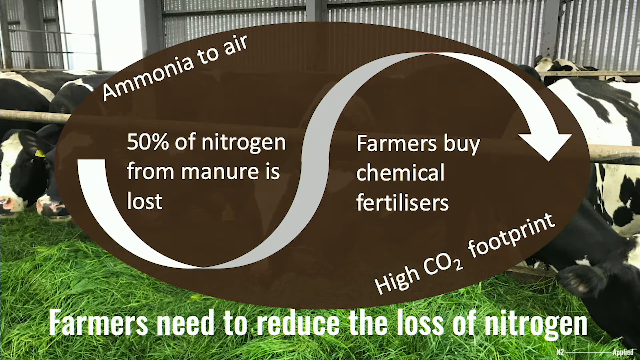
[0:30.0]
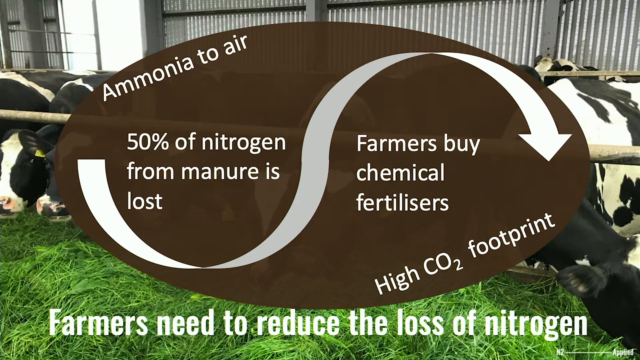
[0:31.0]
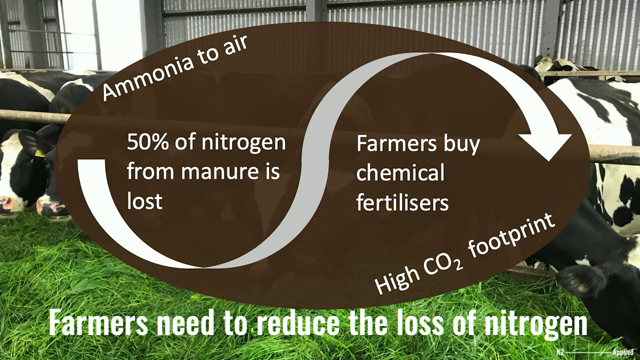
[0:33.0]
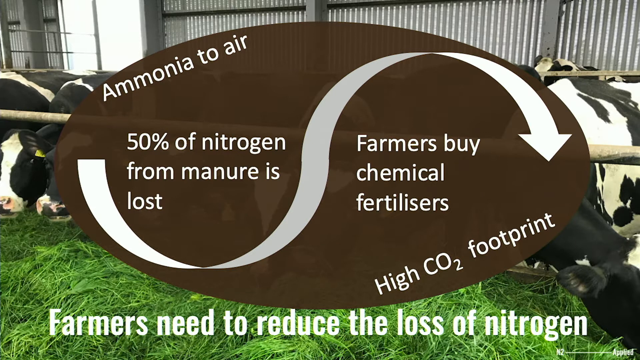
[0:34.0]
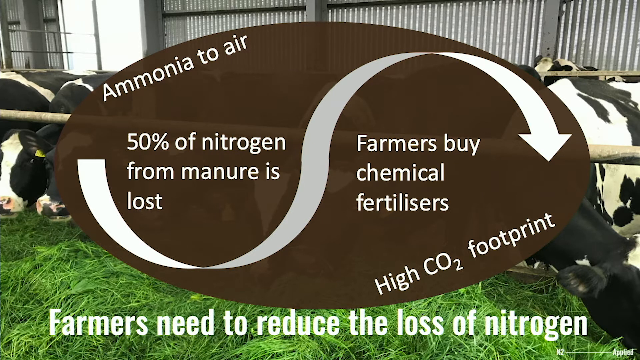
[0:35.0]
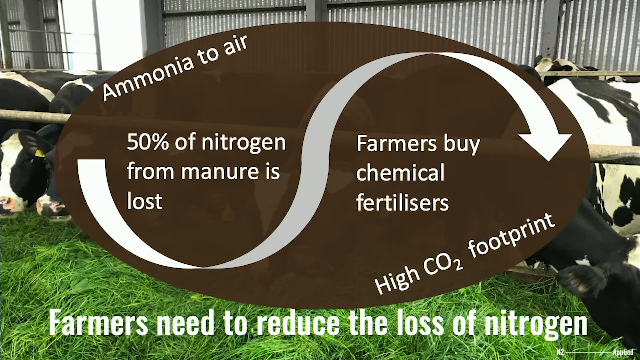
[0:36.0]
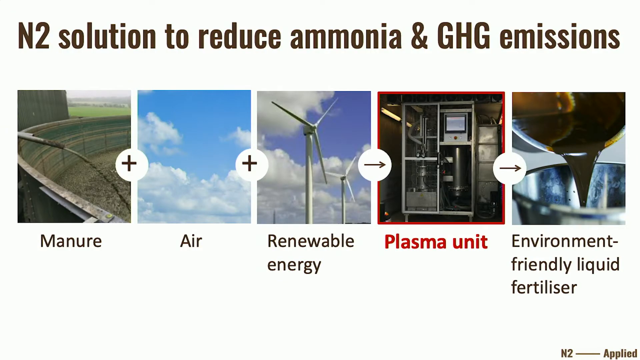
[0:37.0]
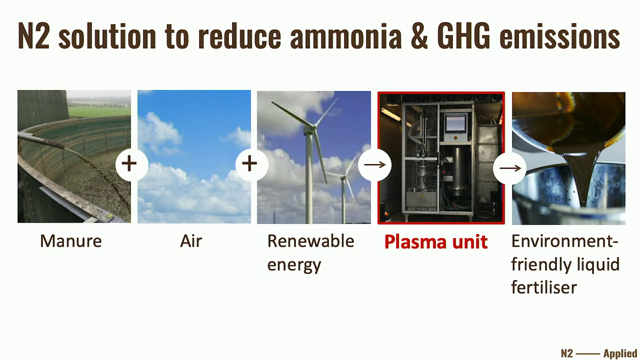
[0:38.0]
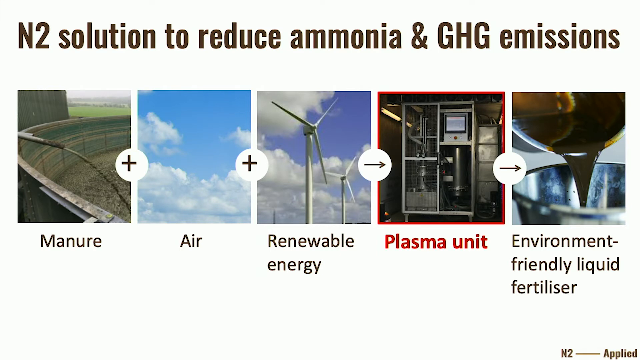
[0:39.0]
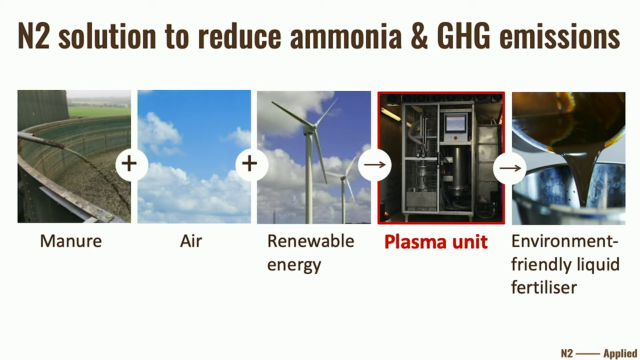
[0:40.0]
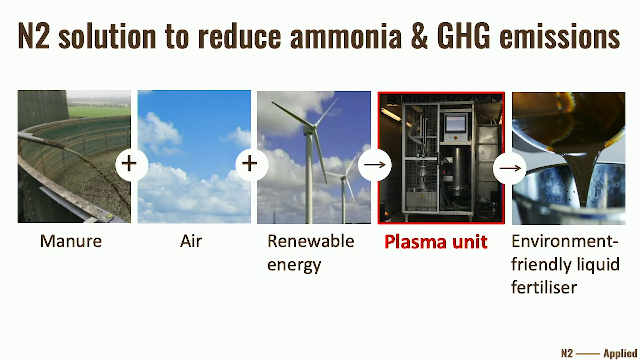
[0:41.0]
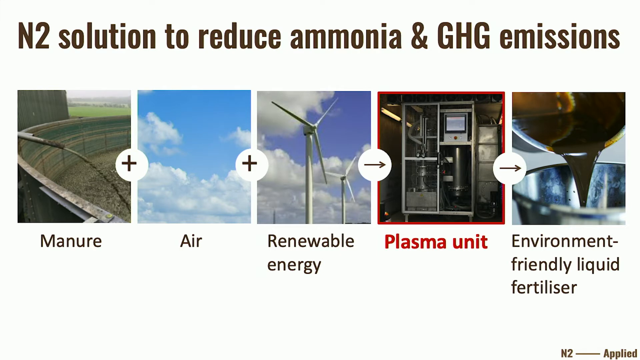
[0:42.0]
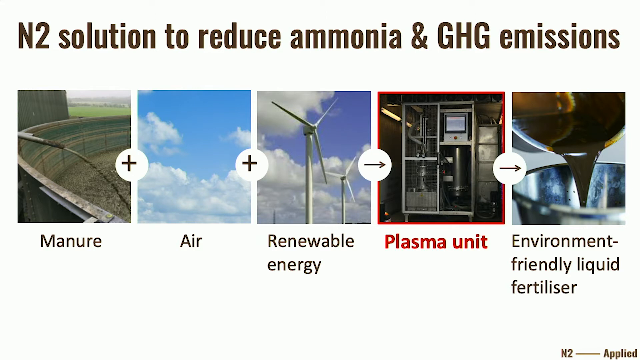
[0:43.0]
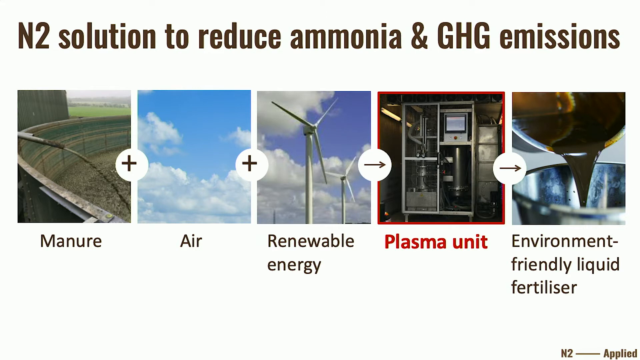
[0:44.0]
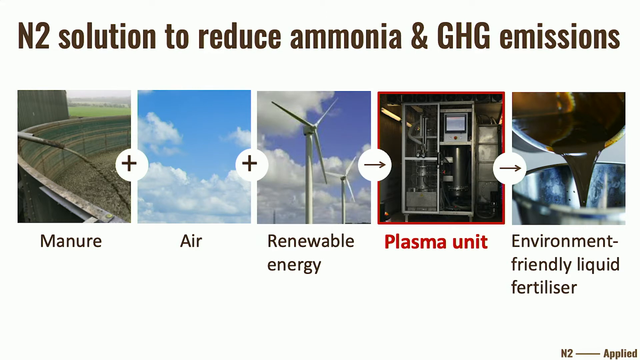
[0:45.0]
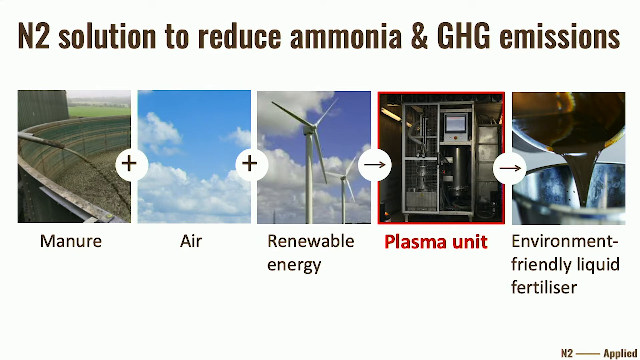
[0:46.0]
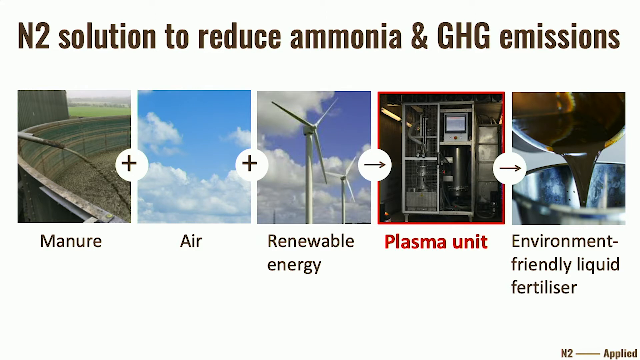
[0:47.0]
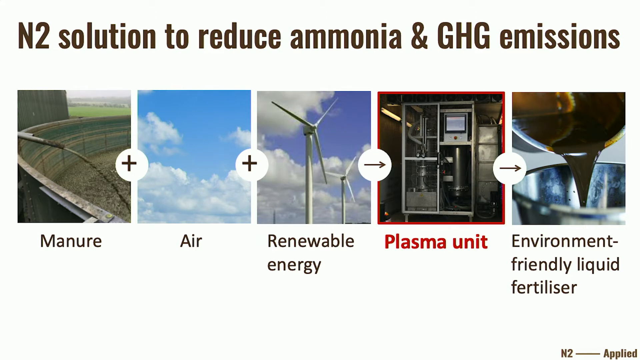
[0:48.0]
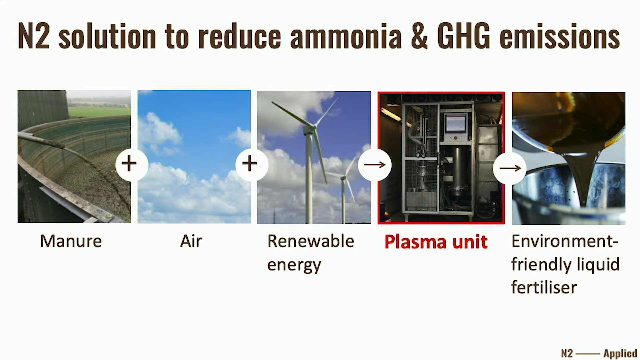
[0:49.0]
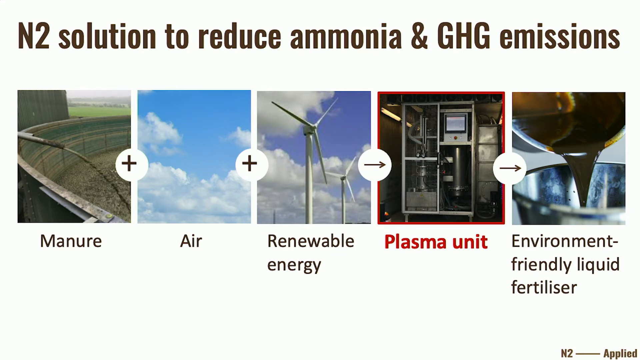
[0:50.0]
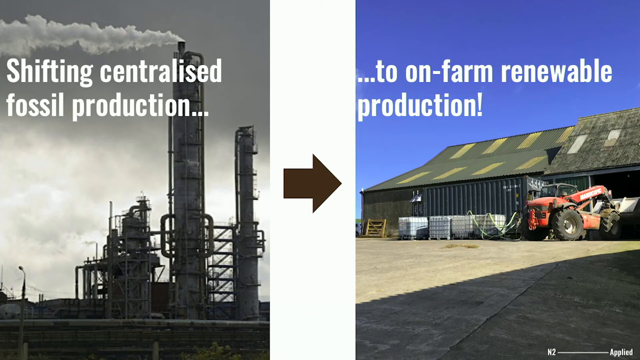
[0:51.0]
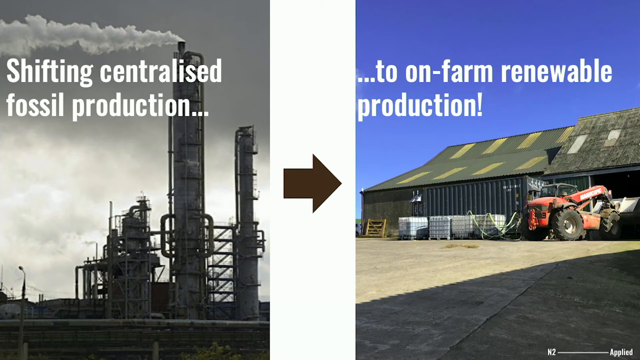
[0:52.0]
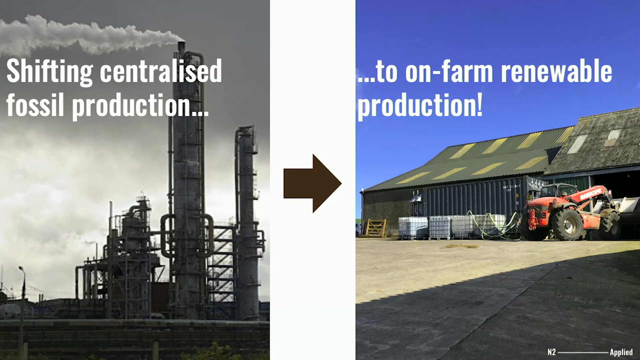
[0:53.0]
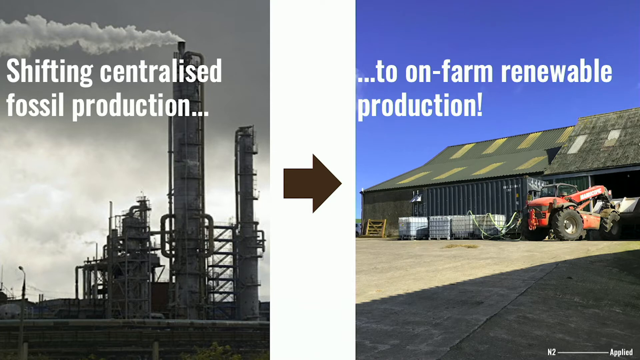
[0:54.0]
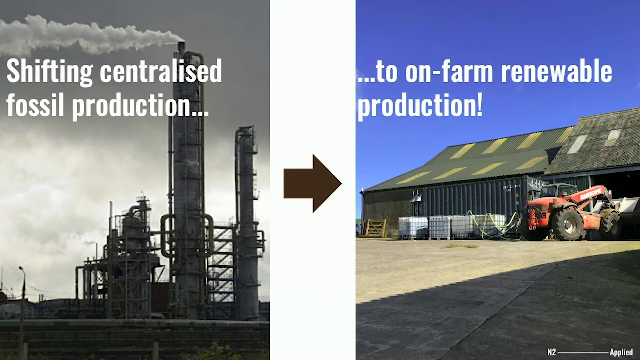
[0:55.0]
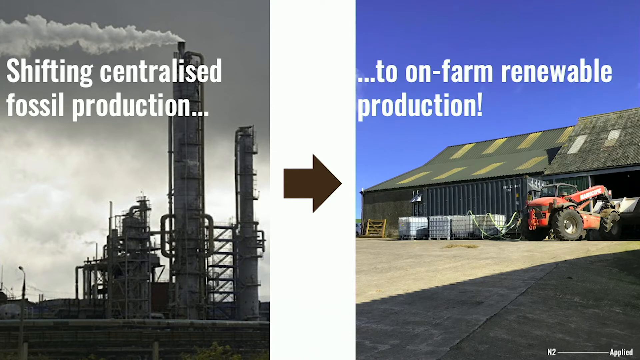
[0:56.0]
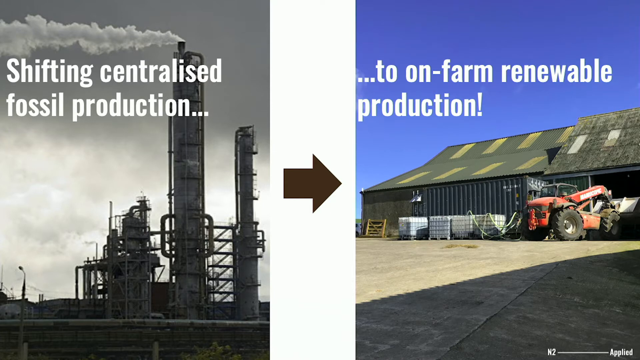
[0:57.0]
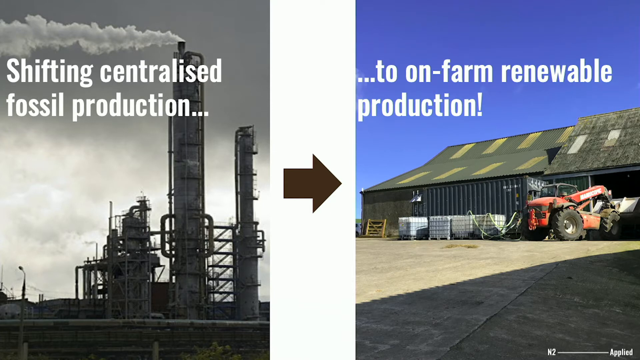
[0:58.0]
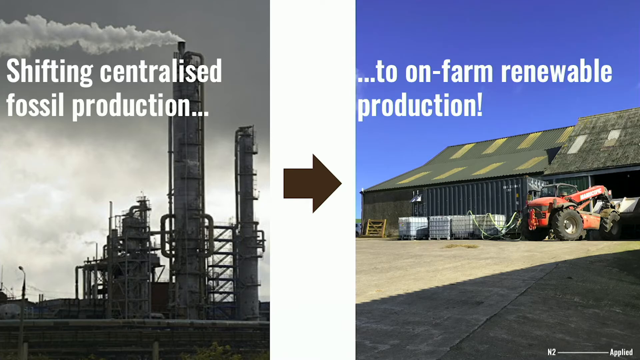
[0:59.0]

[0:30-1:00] The scene shows what looks like an indoor food processing plant or farm with a line of black and white cows. At least five of them reach down, eating a pile of green grass beneath their heads, standing between metal bars that cage them in. In front of them is a flowchart running left to right in white text against a brown oval background: "Ammonia to air", "50% of nitrogen from manure is lost", "Farmers buy chemical fertilizers", "High CO2 footprint". Below, white text reads "farmers need to reduce the loss of nitrogen". The scene then switches to a solid white background with five square photos. From left to right: an image of manure outside; "air", a picture of a blue, cloudy sky; "renewable energy"; "plasma unit"; and finally "environment-friendly liquid fertilizer", showing a brown liquid dripping from one container into one below it. At the top, dark text reads "N2 solution to reduce ammonia and GHG emissions".